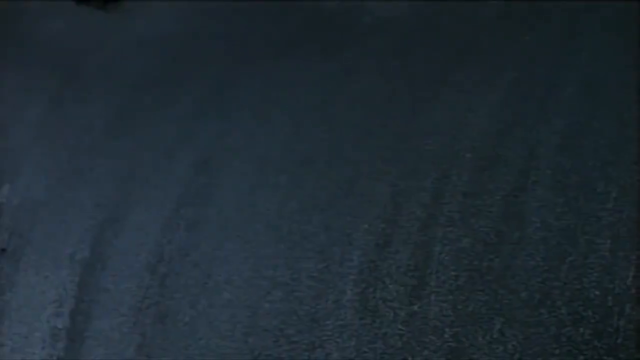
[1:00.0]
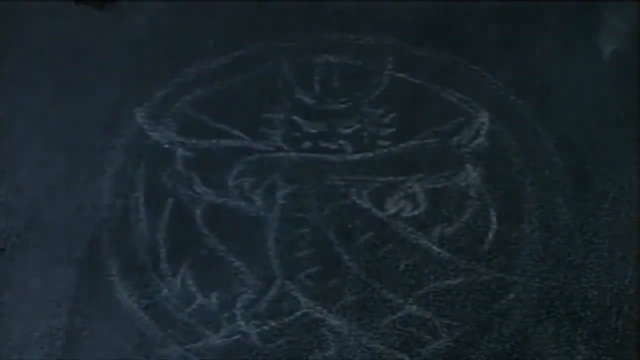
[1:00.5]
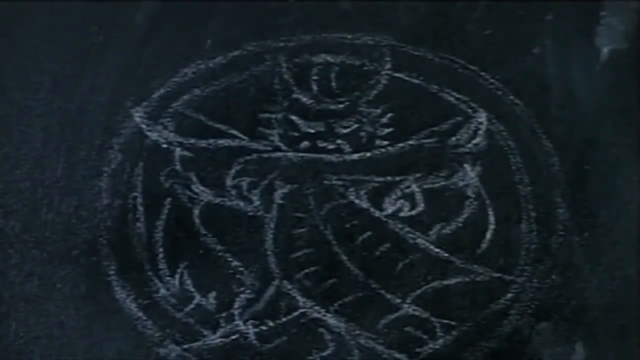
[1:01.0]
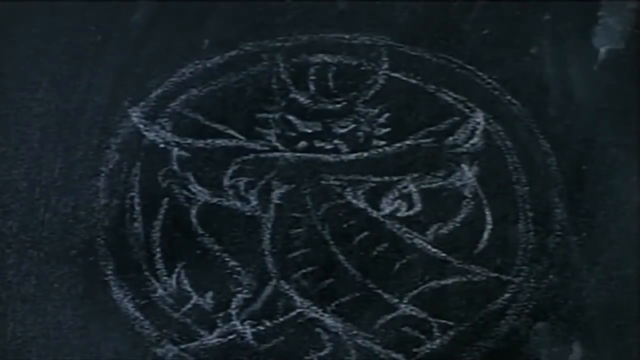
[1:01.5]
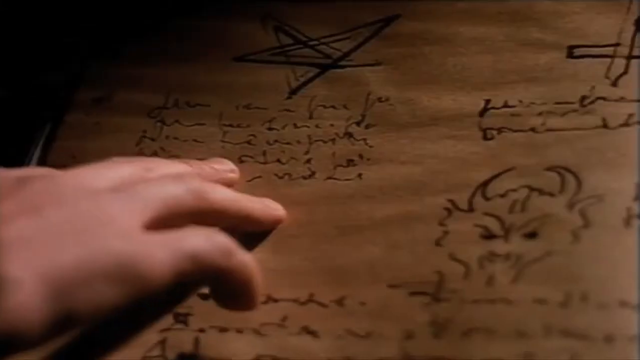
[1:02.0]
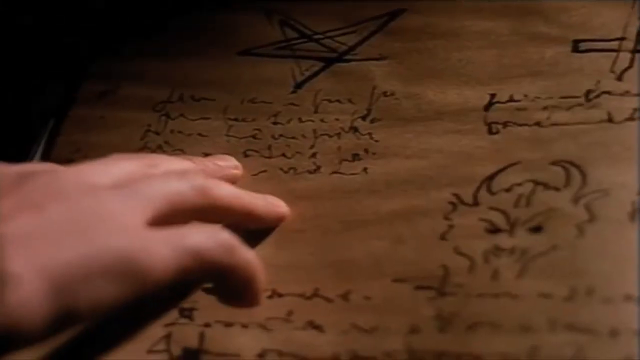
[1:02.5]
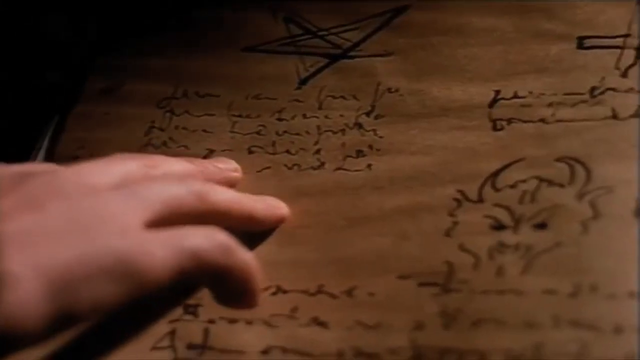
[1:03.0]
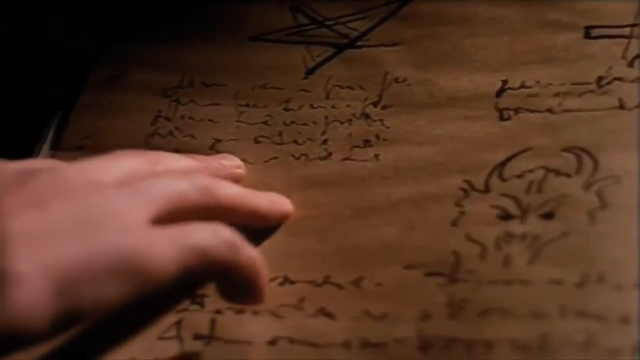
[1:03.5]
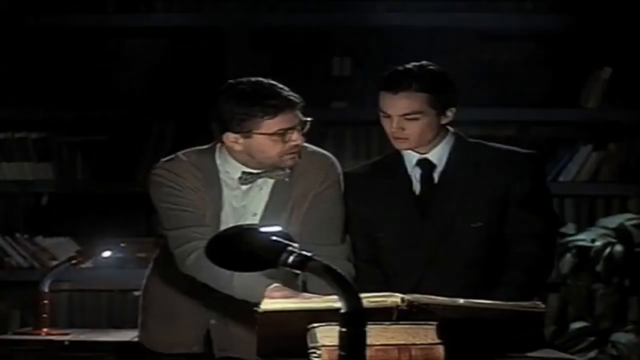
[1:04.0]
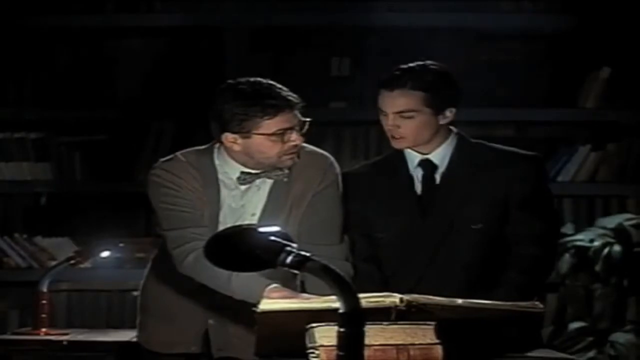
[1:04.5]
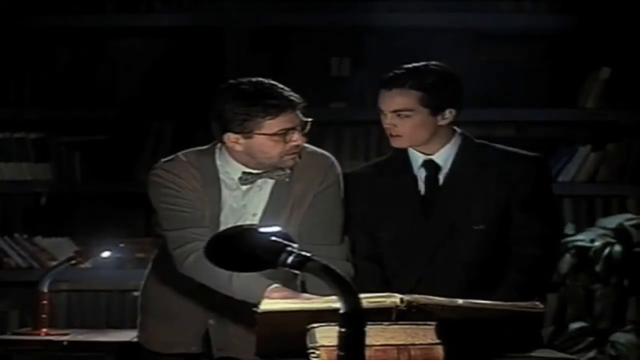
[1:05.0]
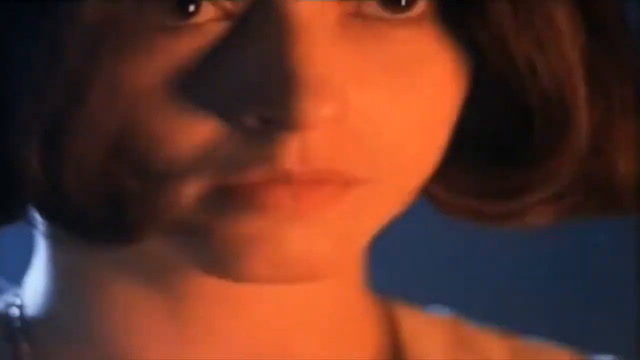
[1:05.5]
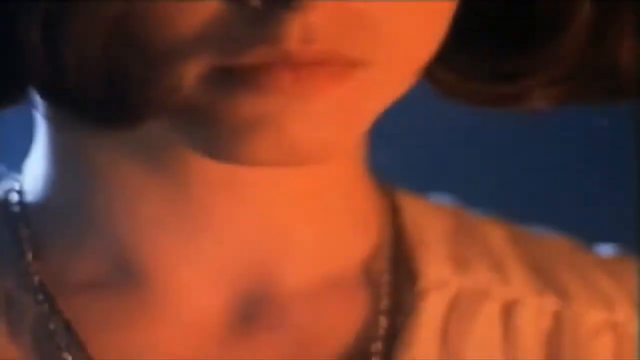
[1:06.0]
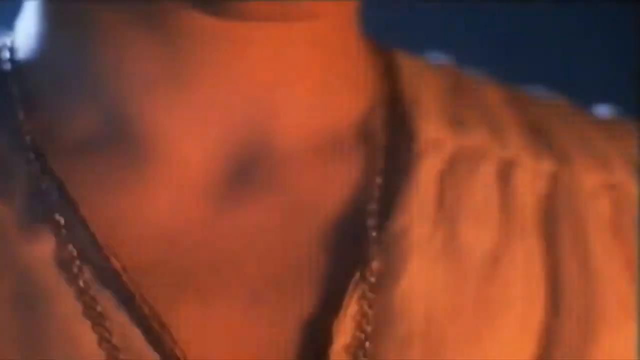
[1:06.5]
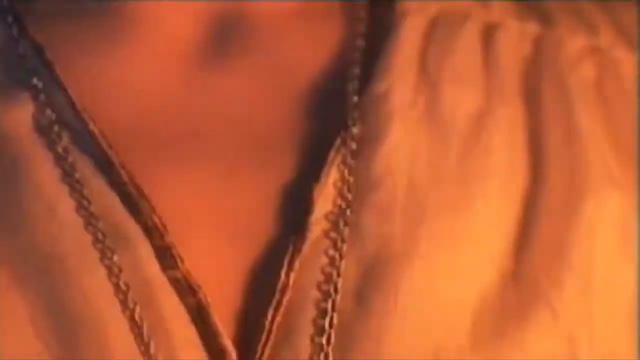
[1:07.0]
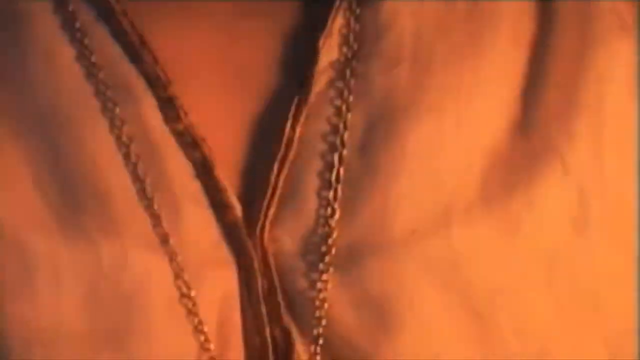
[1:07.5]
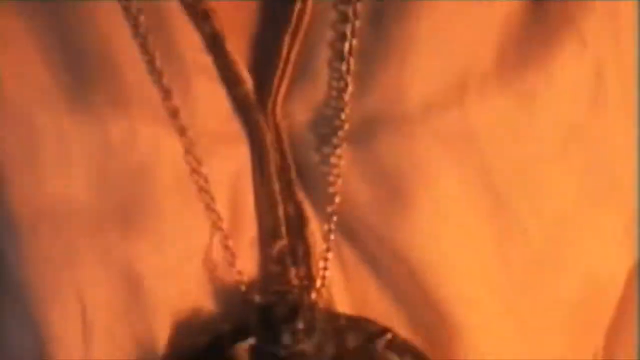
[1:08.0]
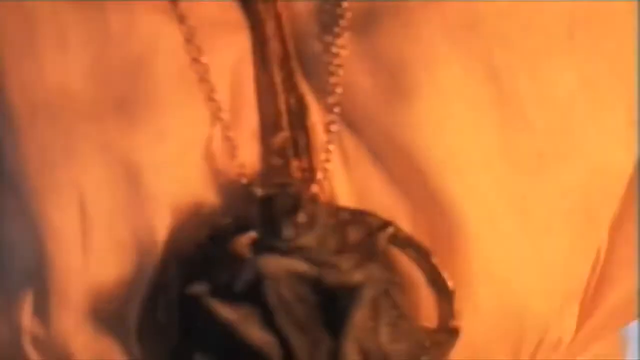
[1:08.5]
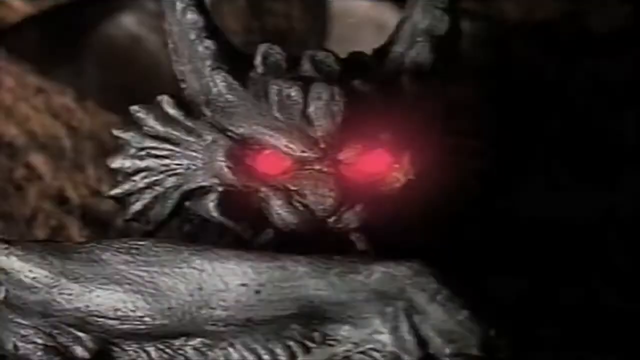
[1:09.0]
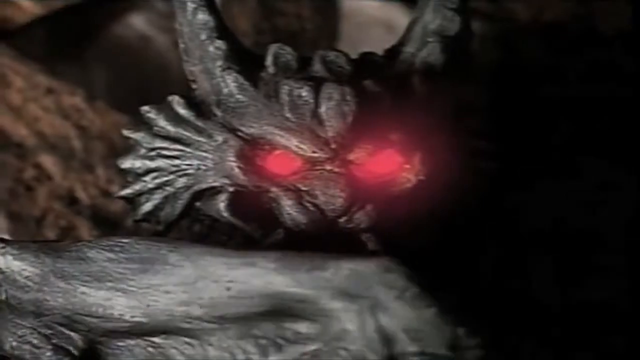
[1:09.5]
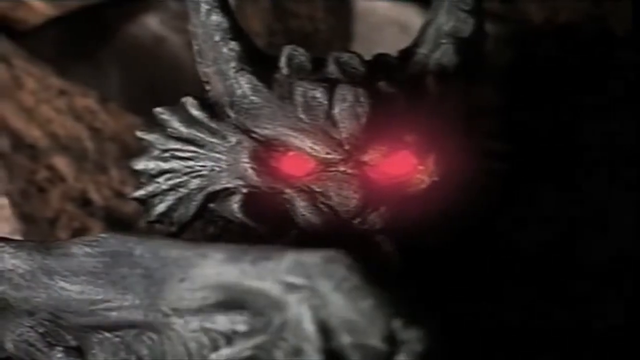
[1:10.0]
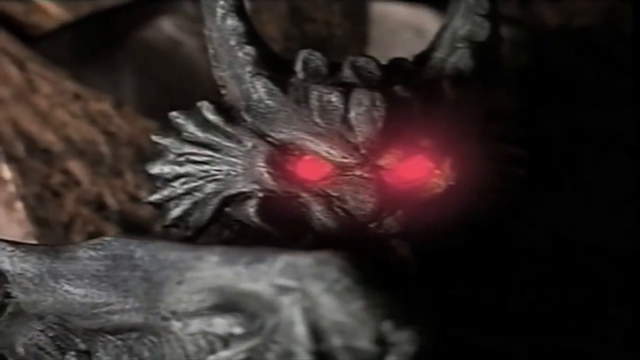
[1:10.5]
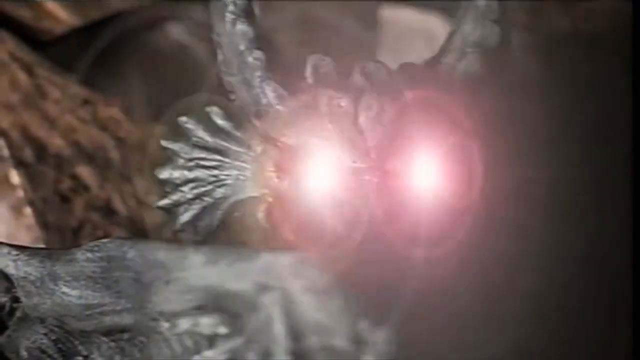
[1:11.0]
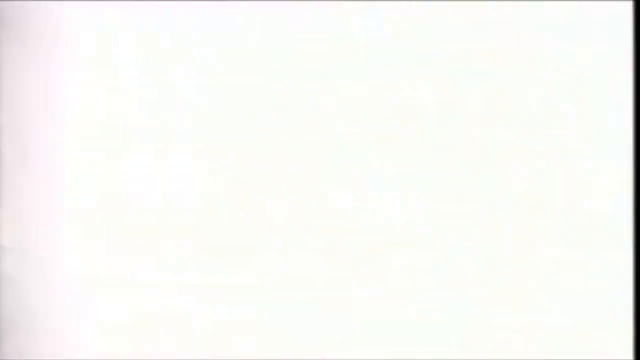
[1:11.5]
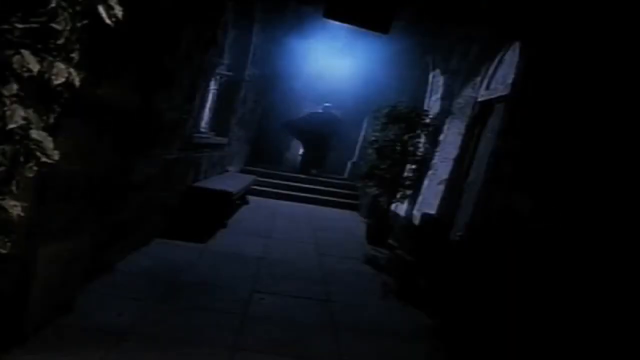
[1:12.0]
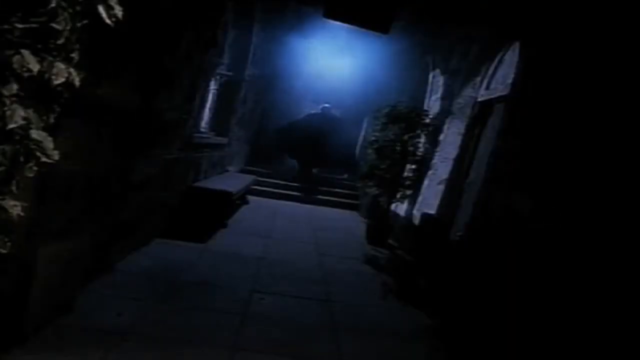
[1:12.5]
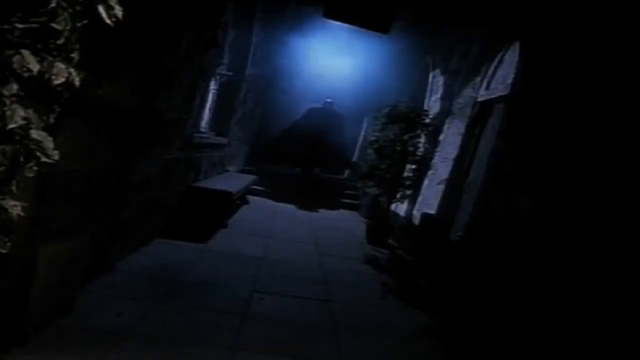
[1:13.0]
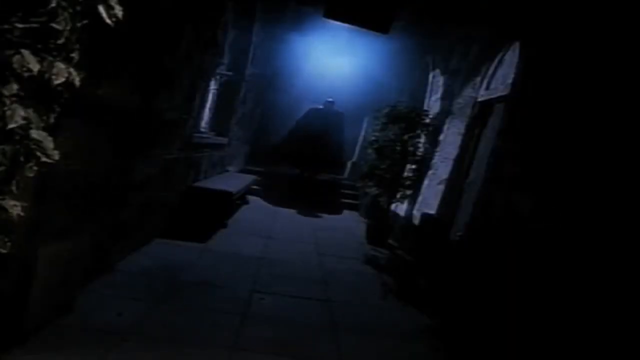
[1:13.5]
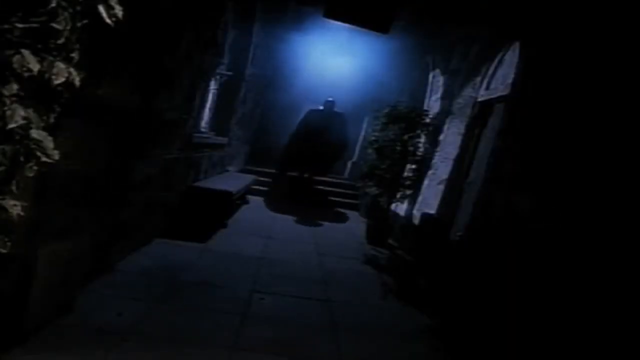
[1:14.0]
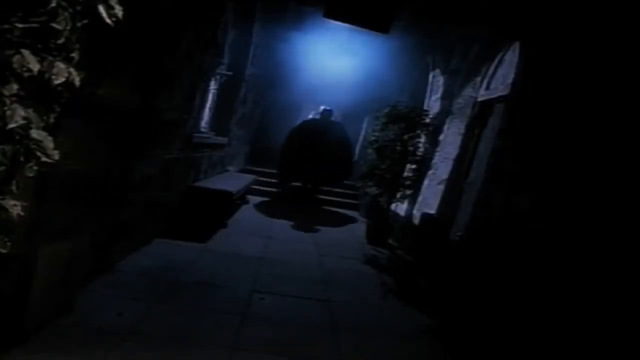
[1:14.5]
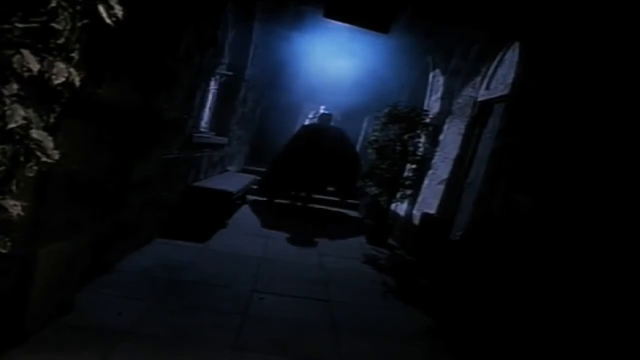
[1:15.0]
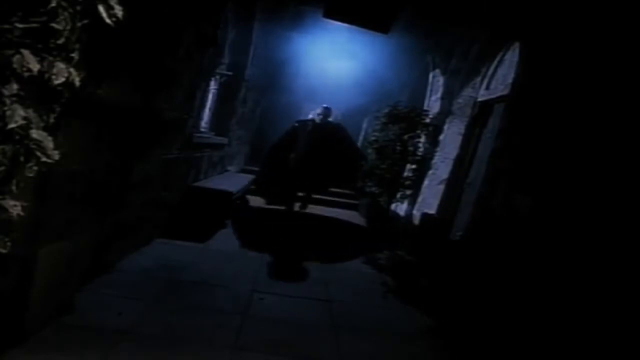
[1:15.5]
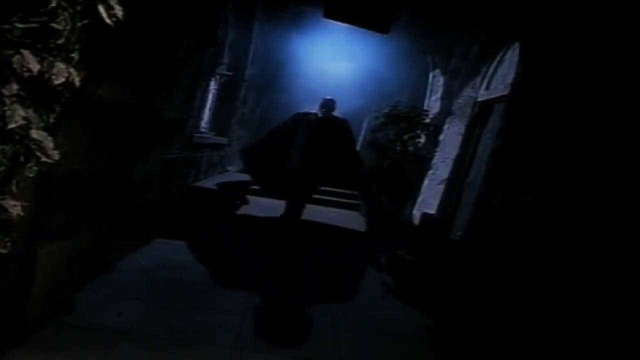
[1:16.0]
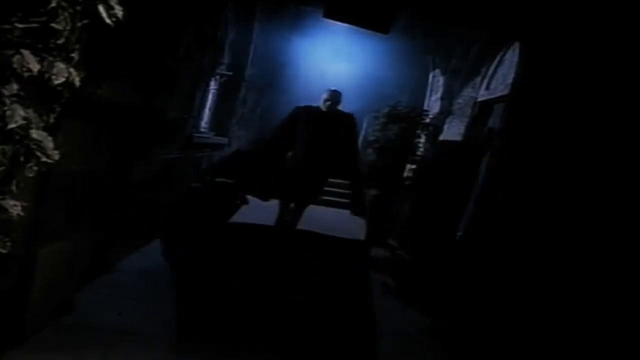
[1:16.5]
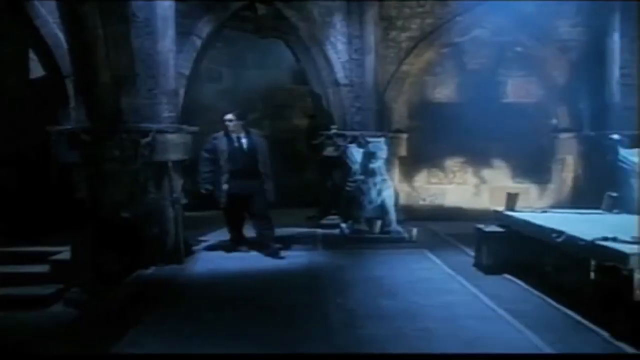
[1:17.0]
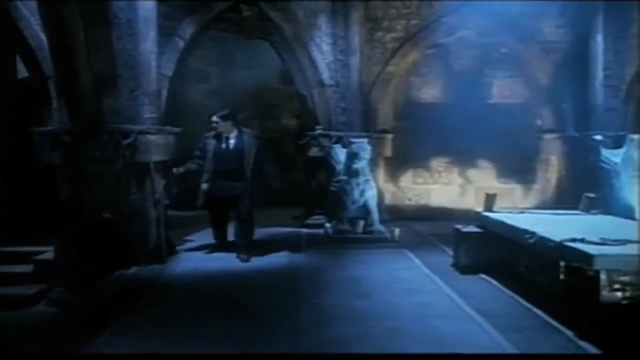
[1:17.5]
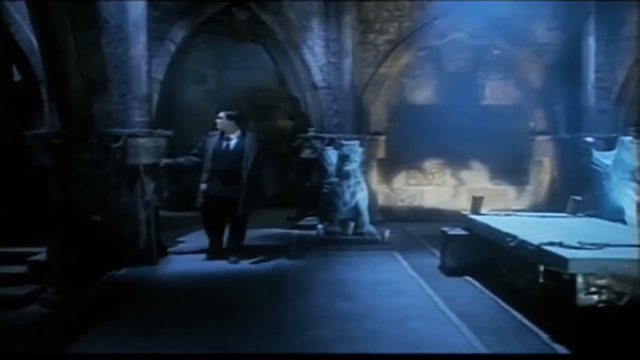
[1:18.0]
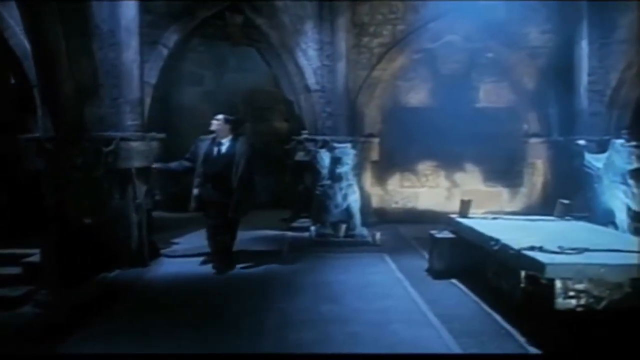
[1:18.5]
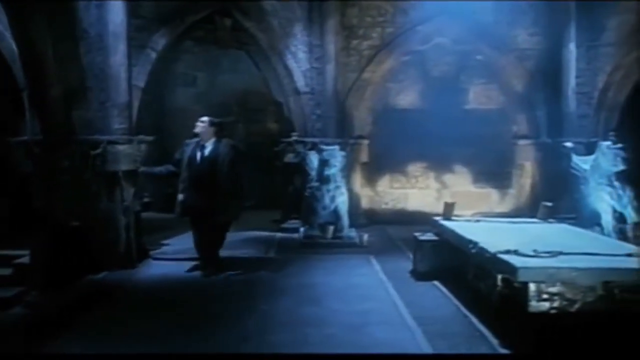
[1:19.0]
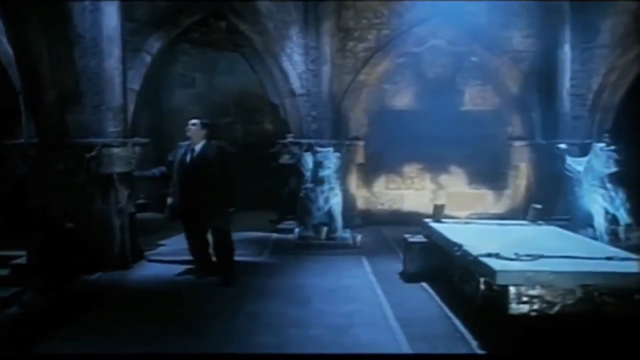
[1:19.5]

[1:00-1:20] A black round hard disk and a picture of a pentagram appear. Two men, one in a sweater and one in a suit, are over an overhead projector with a paper showing a picture of something like a demon and a pentagram. The girl is shown wearing a necklace or emblem around her neck with red eyes on it, the same red eyes seen earlier on the man who did not look quite human. A man with a long, flowing cape walks in a dark area, maybe underground. A man in a suit, apparently also wearing a trench coat, walks below, where there is something like a casket. The place is very old and rustic, with huge arched walkthrough areas; he looks around, and the casket is just there.